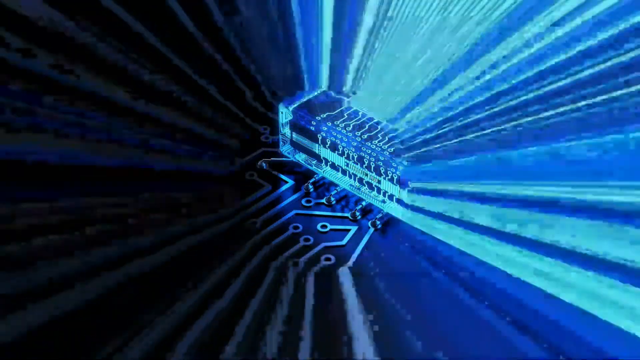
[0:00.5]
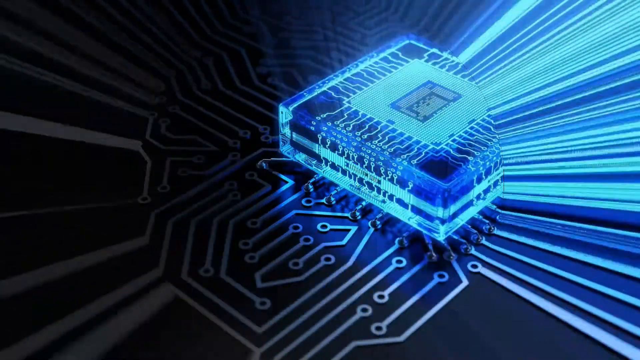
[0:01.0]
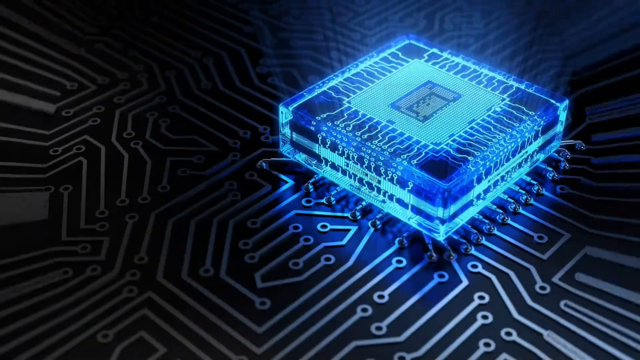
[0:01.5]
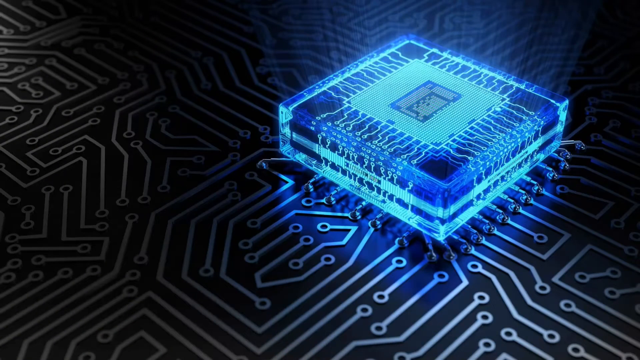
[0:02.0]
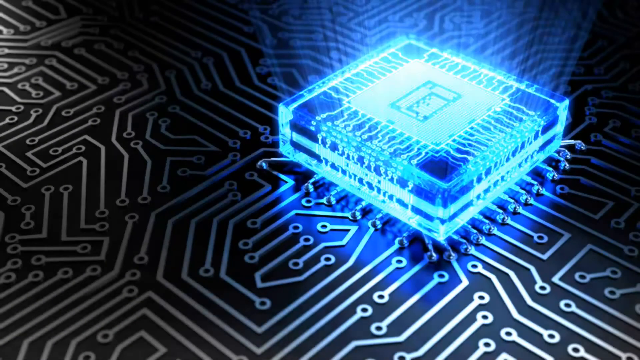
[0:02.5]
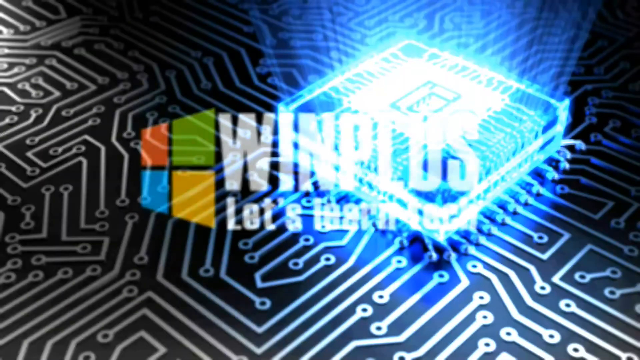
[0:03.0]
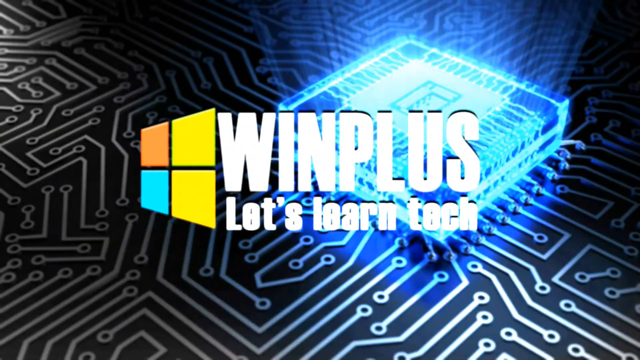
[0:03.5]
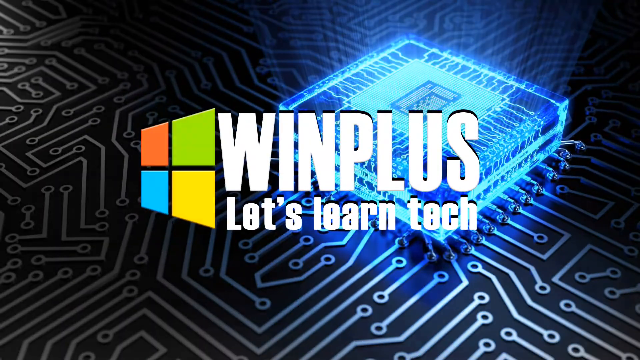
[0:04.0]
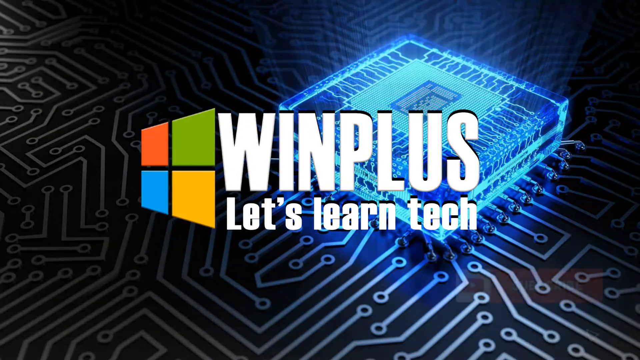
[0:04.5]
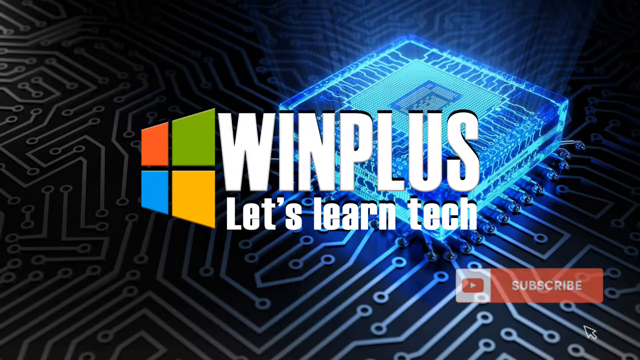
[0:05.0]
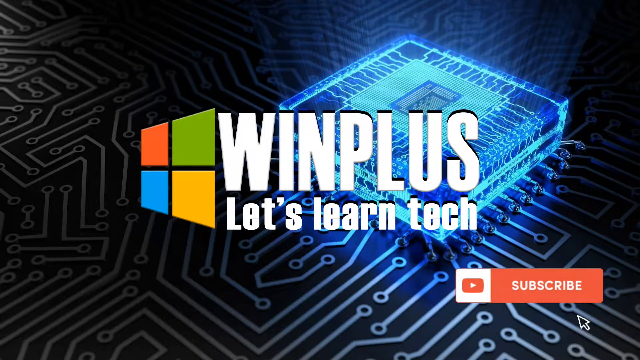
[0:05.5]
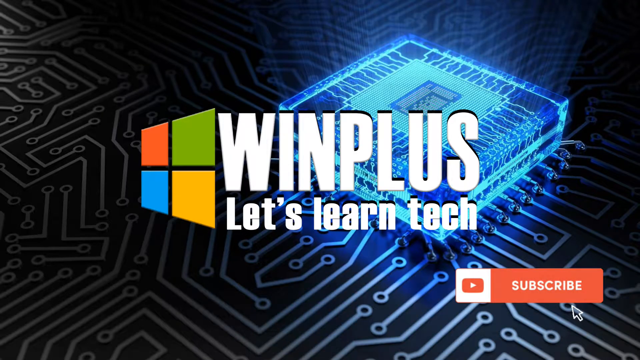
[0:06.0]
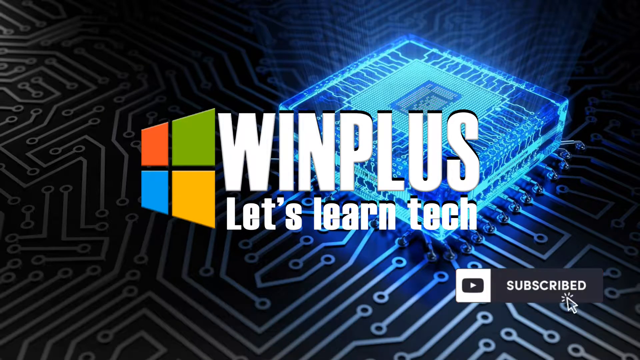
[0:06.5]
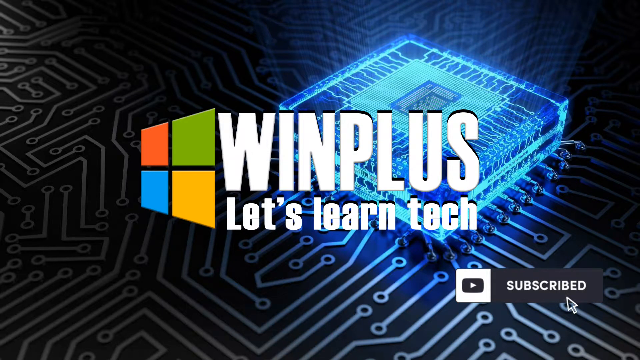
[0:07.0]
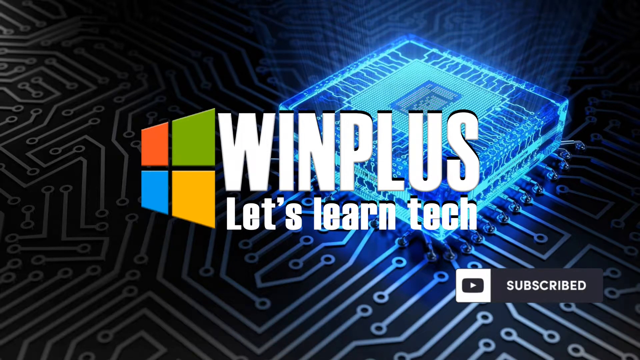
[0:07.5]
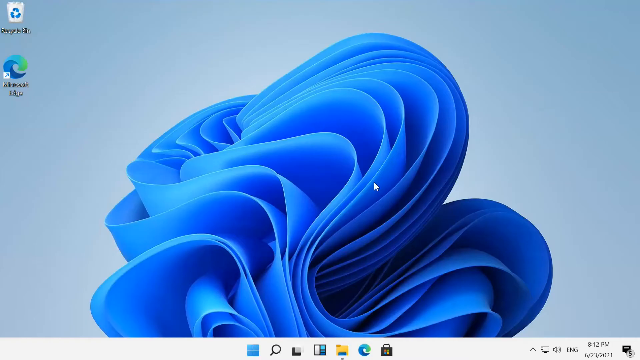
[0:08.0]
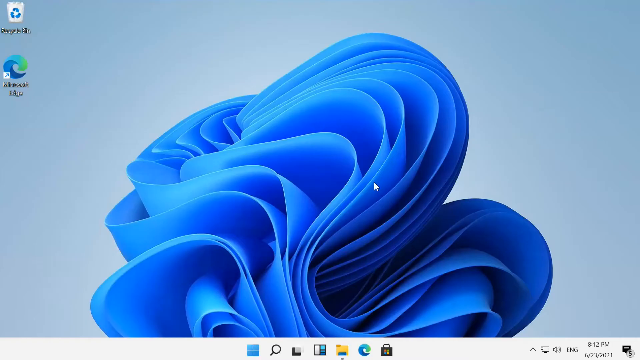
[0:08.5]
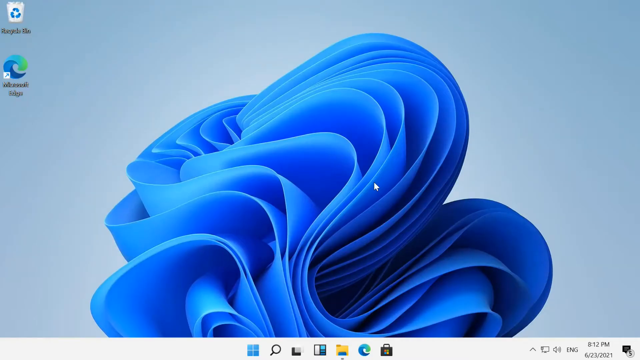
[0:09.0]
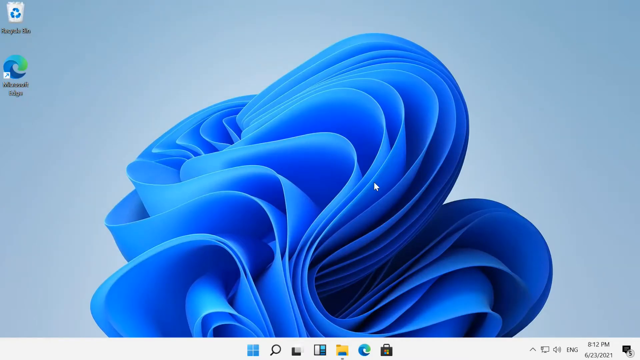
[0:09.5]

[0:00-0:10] The video begins with an animation that appears to be looking inside a computer device. The Windows logo appears in red, green, yellow and blue, with white letters reading "Winplus" underneath, along with "Let's learn tech." In the bottom right of the screen is a rectangle: its left side is a white space with a red and white YouTube play button logo, and the rest of the rectangle is red with white letters that say "subscribe." A cursor seems to press the subscribe button, which turns black and white and says "subscribed." The video then transitions to a desktop background. The picture on the background is blue and appears to be ribbons folded up into a circle. In the top left of the screen is a white trash can with a blue recycle logo, with black letters underneath reading "recycle bin." Under the recycle bin icon is a Microsoft Edge icon.